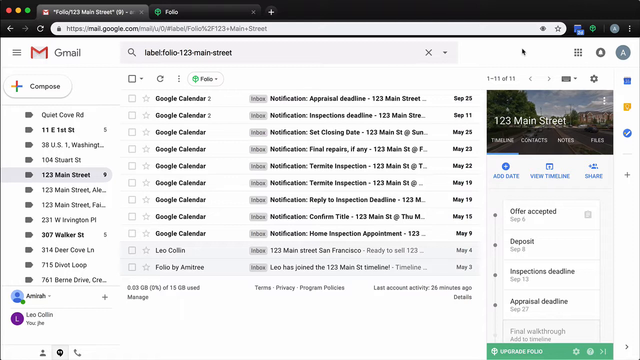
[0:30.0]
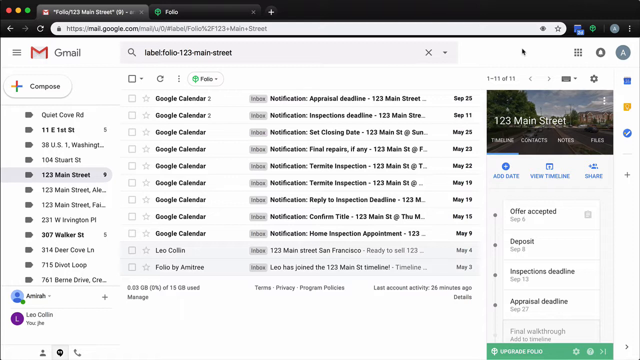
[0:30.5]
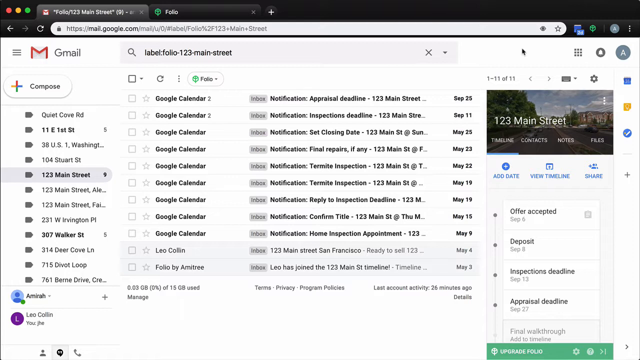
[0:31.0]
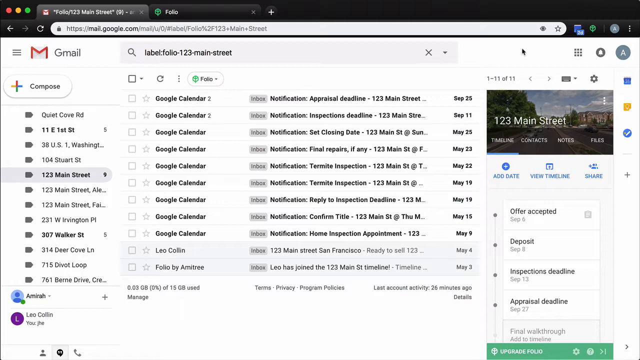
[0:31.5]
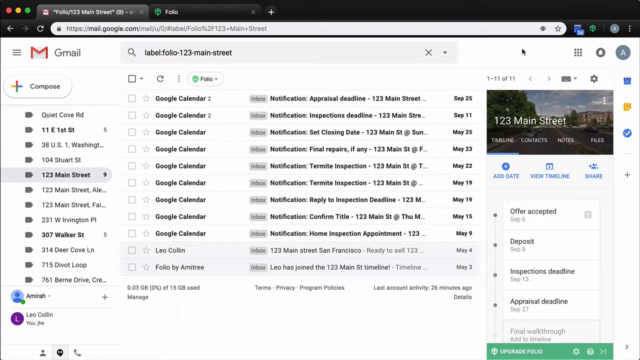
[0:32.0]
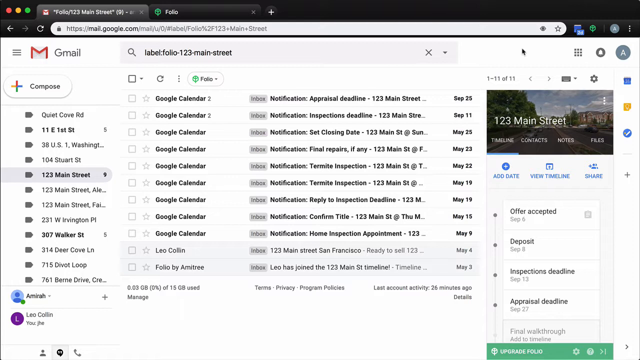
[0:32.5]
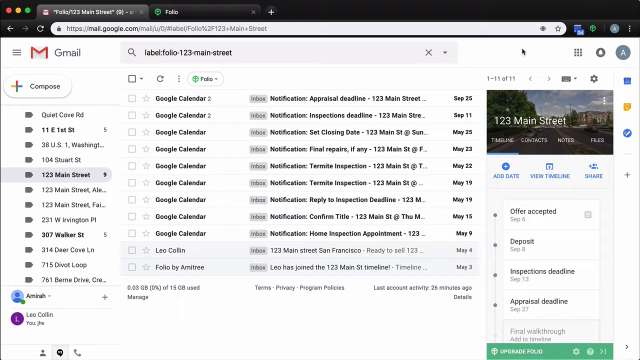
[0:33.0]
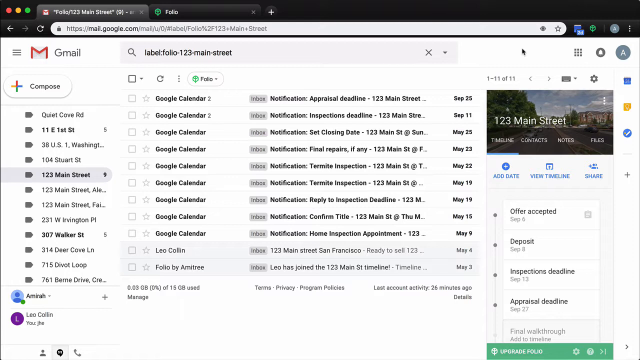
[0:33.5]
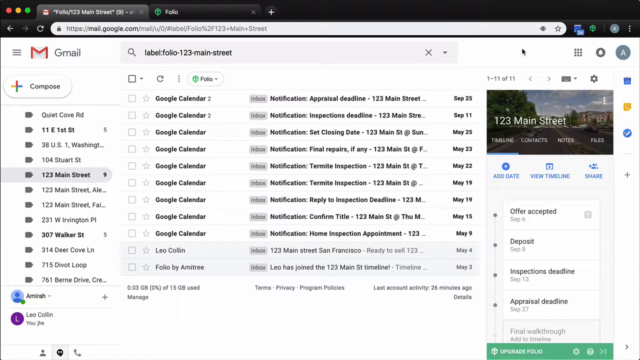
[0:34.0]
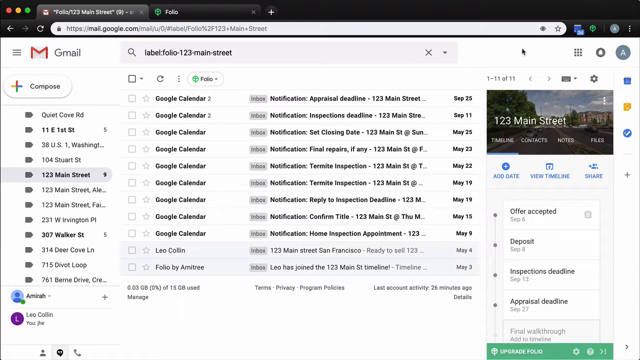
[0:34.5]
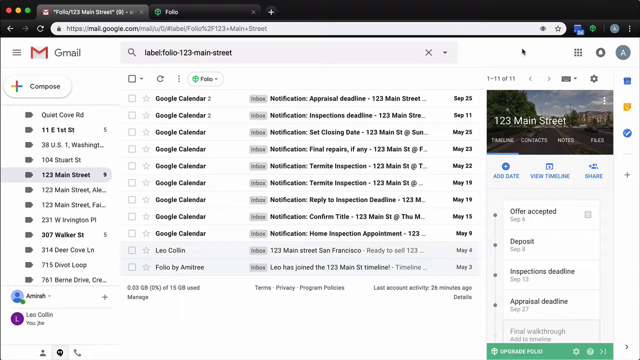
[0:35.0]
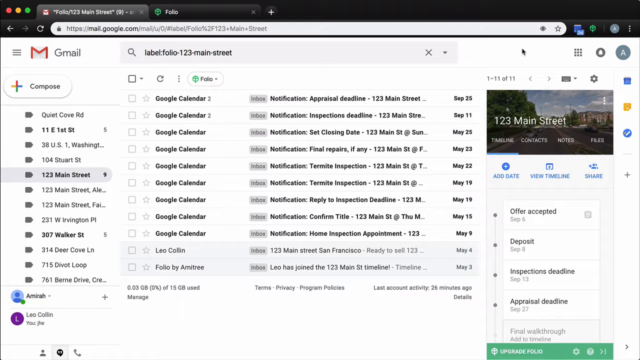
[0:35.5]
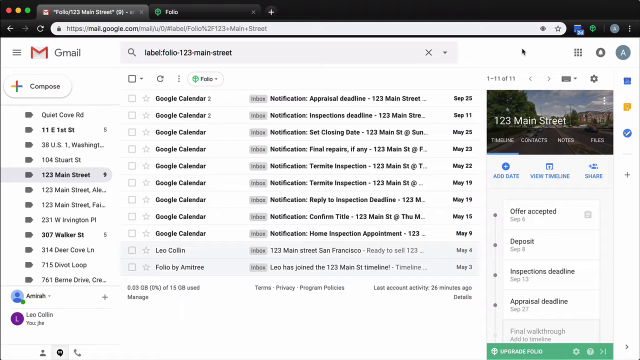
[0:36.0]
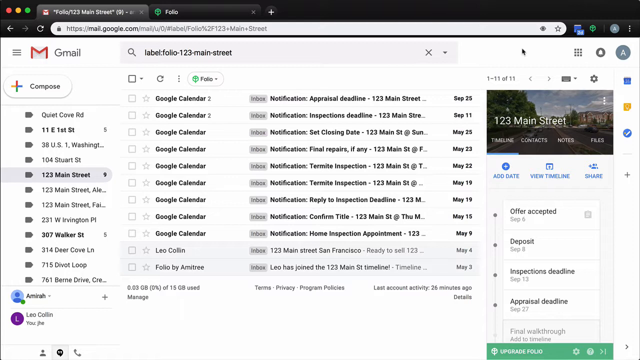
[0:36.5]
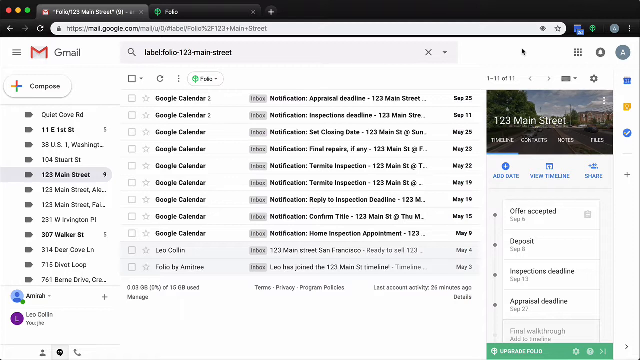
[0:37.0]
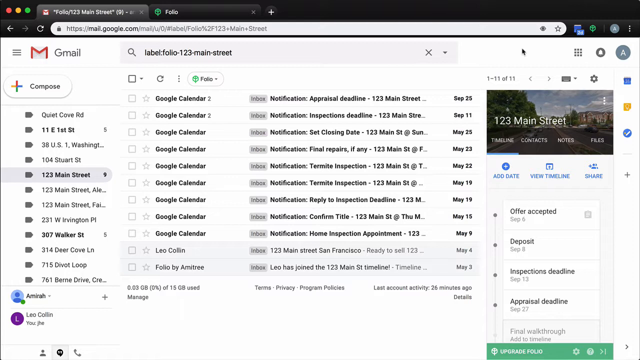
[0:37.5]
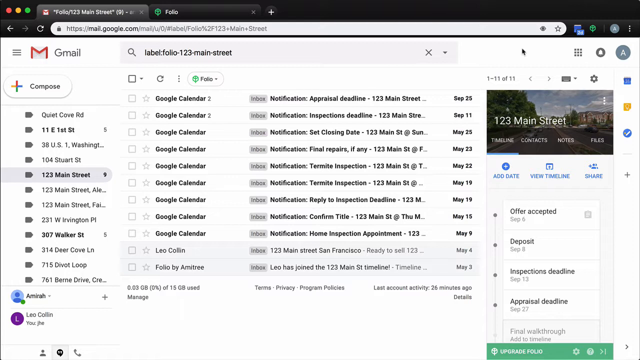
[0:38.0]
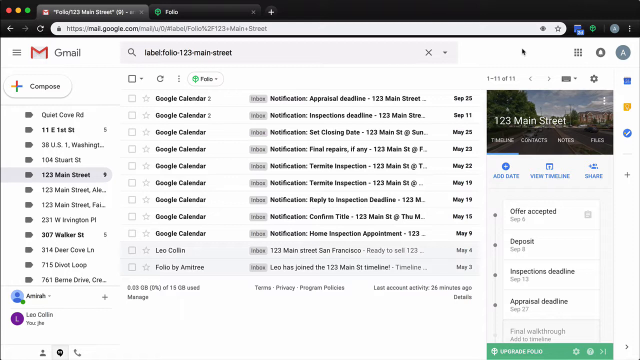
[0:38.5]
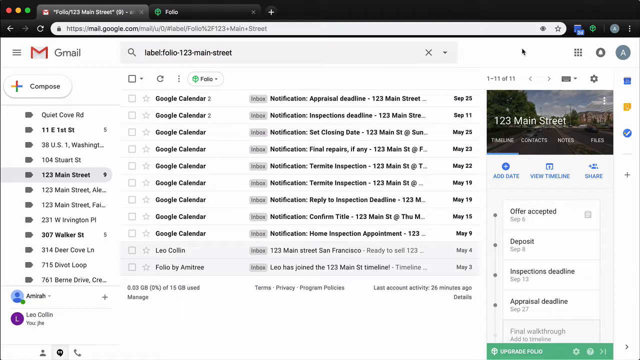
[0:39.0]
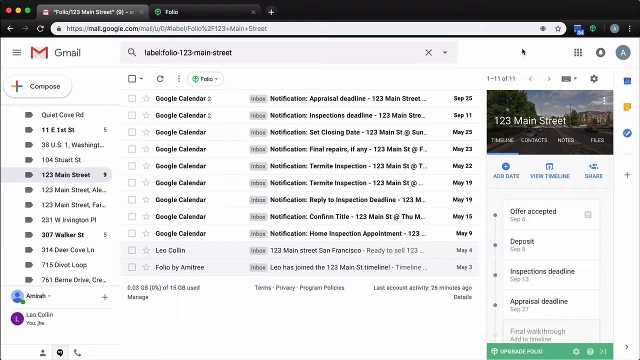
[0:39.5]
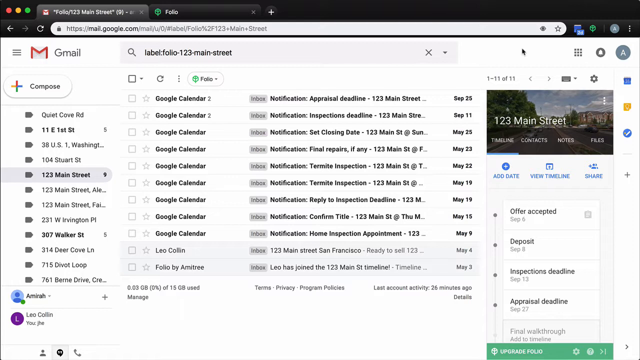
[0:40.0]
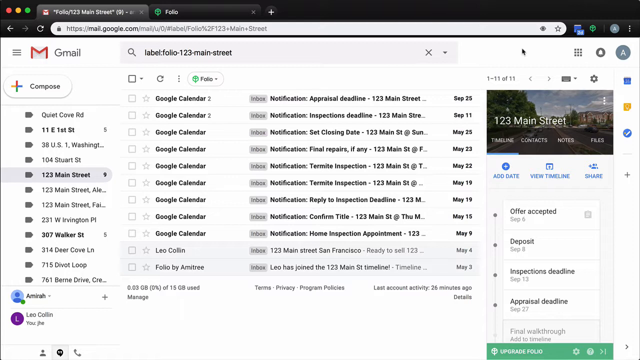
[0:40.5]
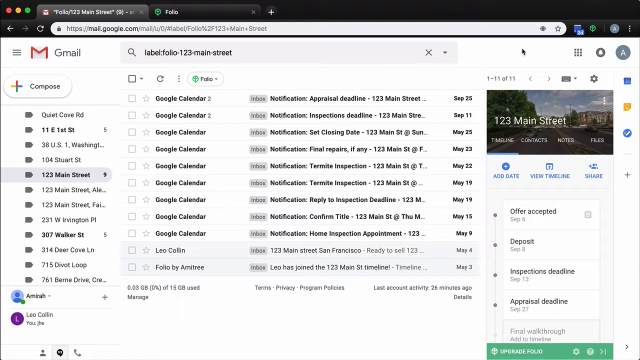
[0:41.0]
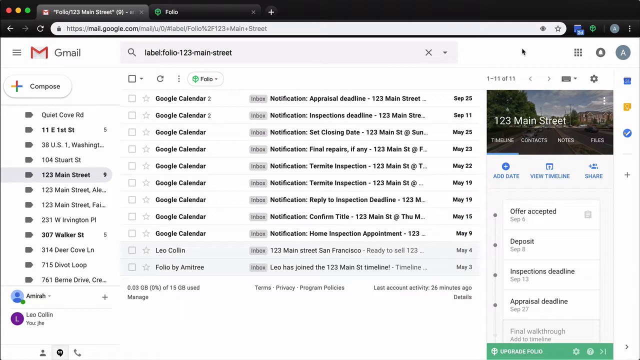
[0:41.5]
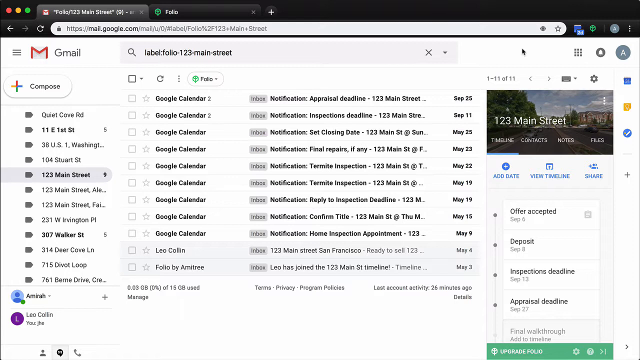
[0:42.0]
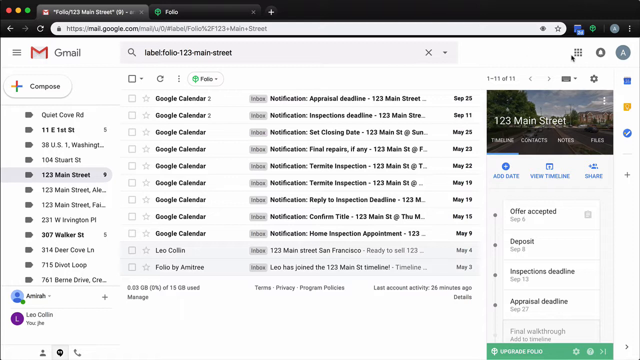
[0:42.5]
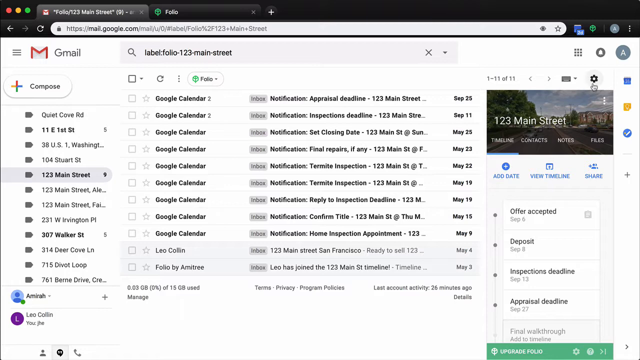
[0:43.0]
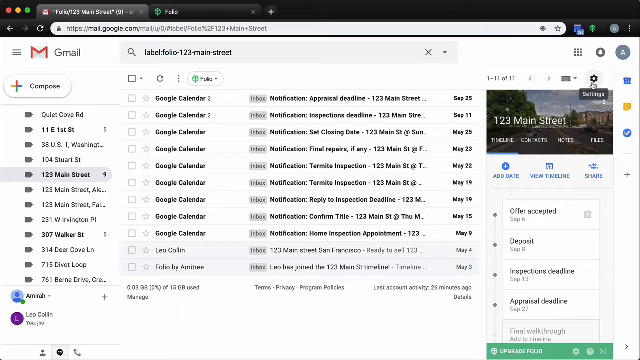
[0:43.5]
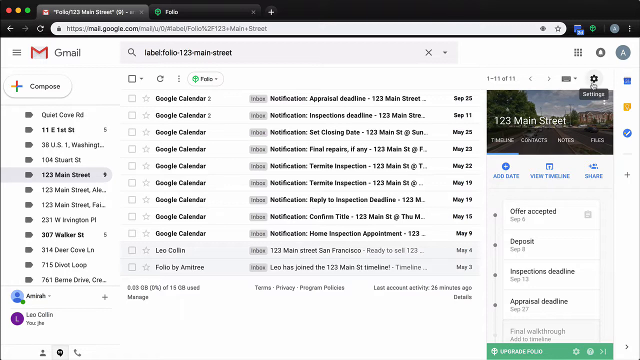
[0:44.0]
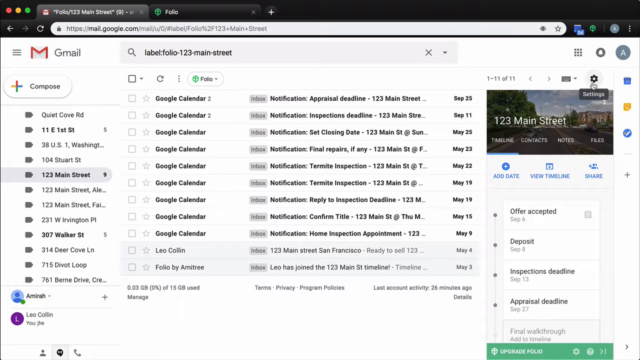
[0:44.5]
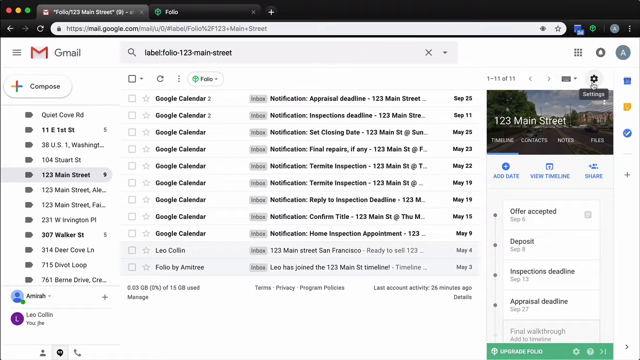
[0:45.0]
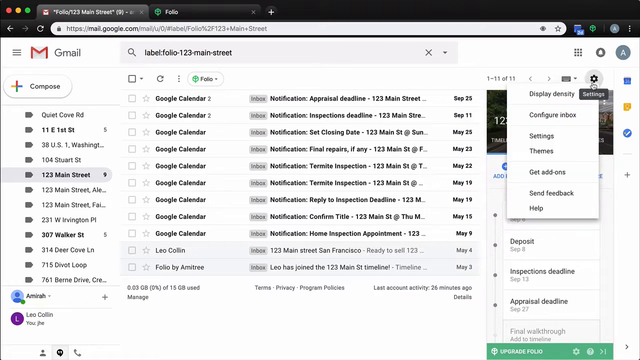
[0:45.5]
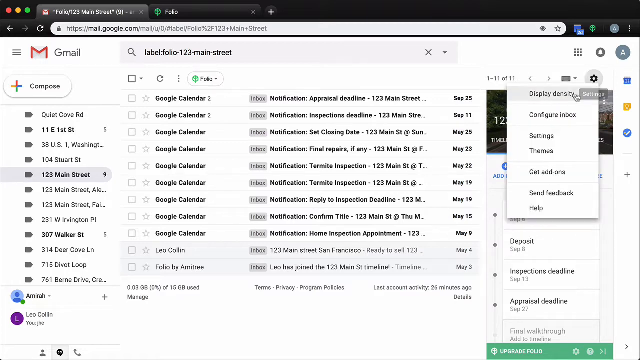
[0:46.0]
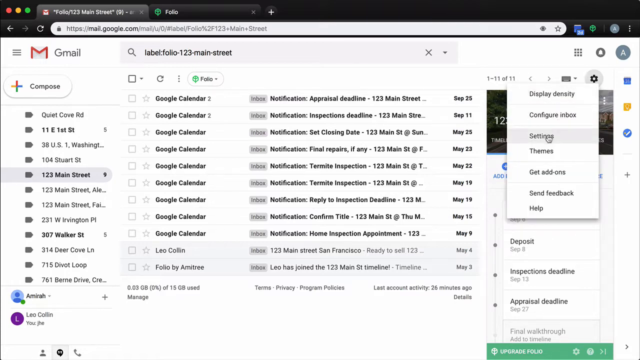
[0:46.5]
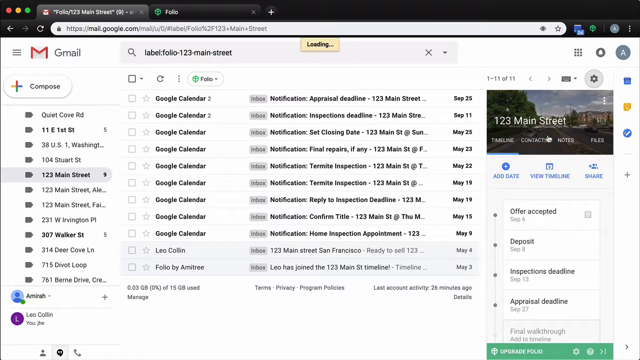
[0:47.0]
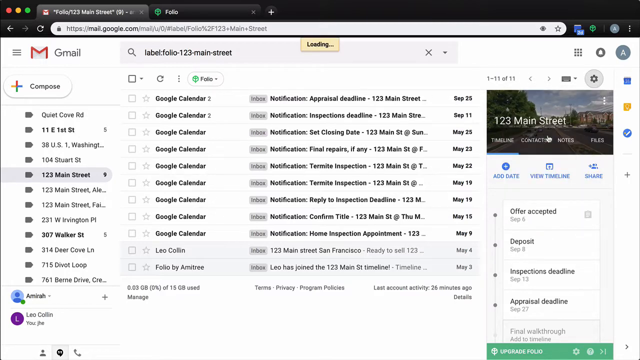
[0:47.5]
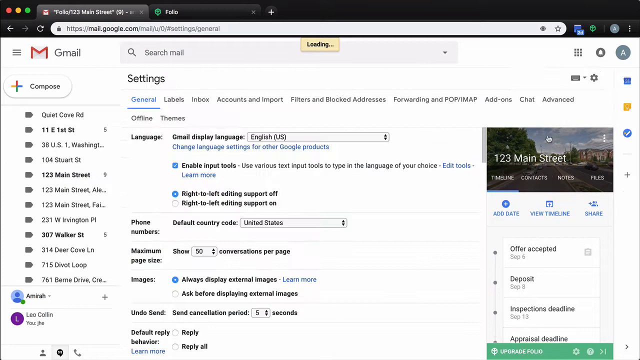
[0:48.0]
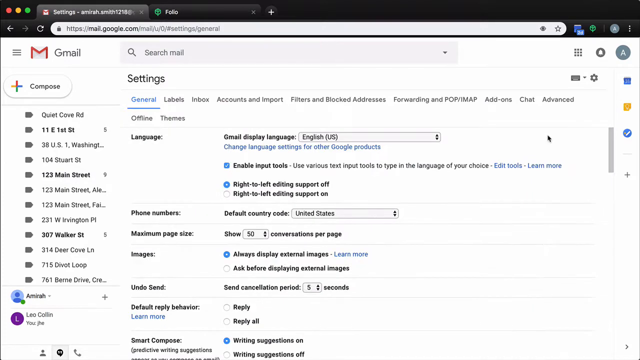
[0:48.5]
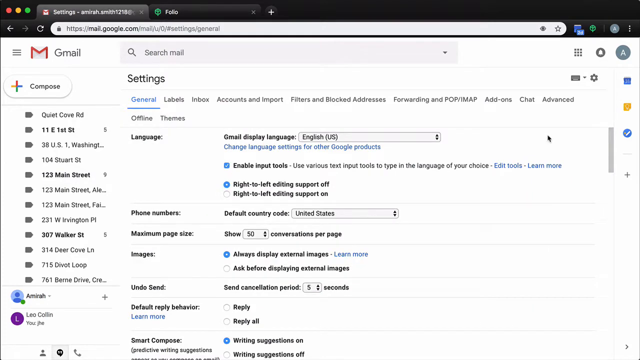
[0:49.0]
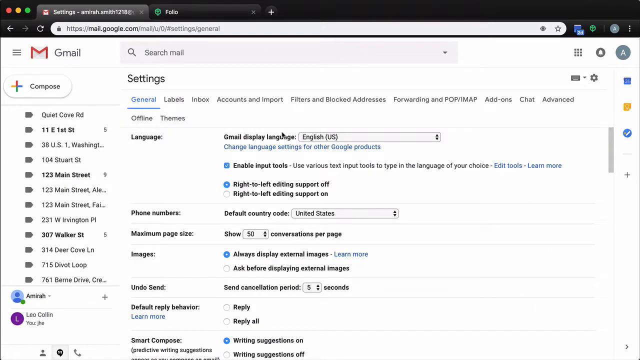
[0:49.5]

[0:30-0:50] On the left side are categories of emails, or flagged ones, most of them from 123 Main Street. The user hovers on the right side and clicks the settings icon, opening a menu with options including Display density, configure inbox, settings, get add-ons, send feedback and help. The user clicks settings, and the settings page appears with categories: general, labels, inbox, accounts and import, filters and blocked addresses, forwarding and POP/IMAP, add-ons, chat and advanced. The general section is open, with many options for configuring the mail, including language and phone number, and drop-down menus for choosing settings. Under the language settings it says "Gmail Display Language", with English US selected in a drop-down menu. Underneath is the clickable text "change language settings for other google products".